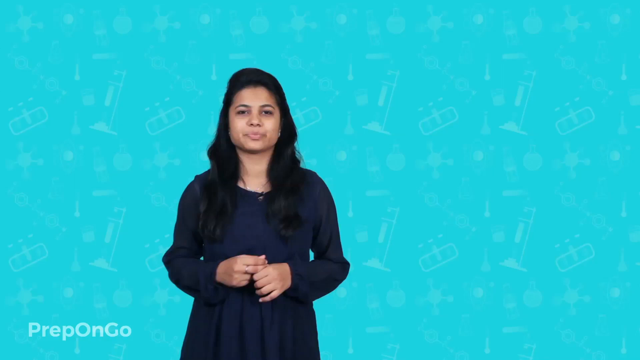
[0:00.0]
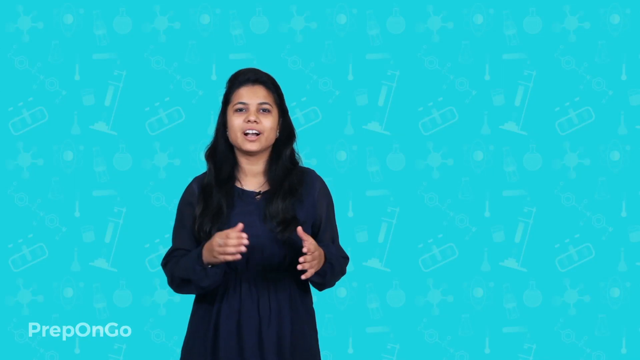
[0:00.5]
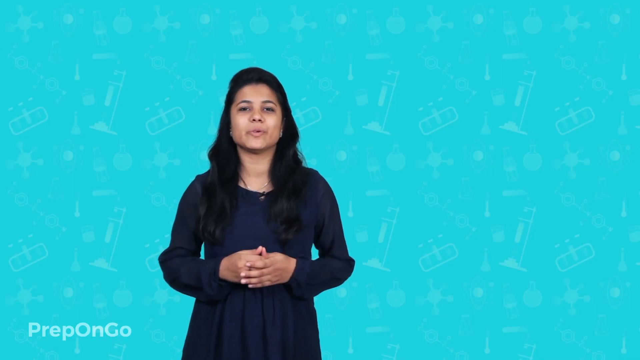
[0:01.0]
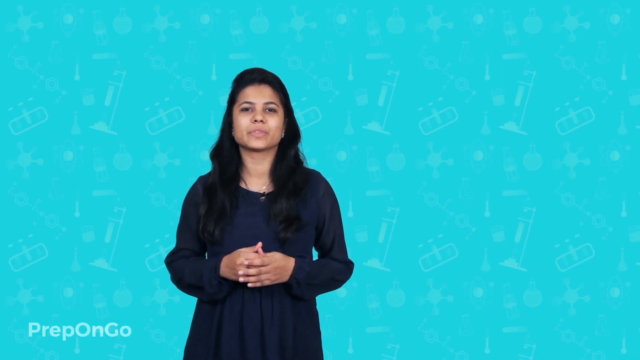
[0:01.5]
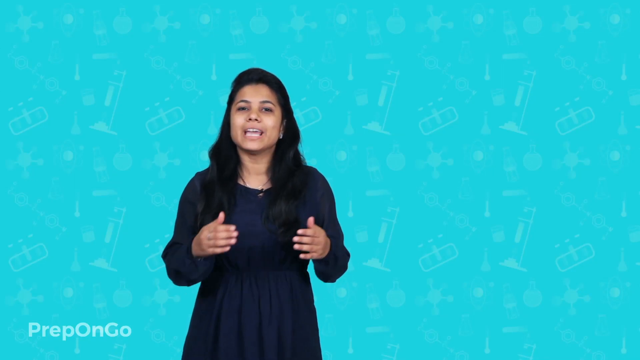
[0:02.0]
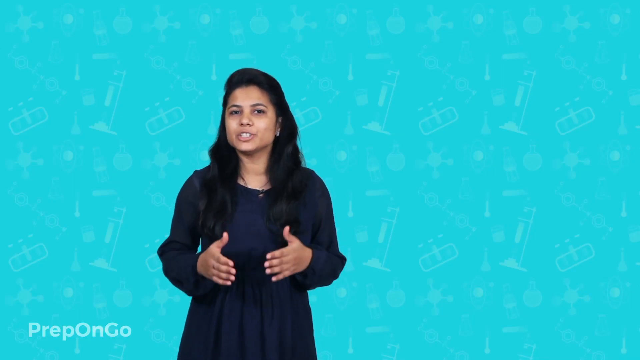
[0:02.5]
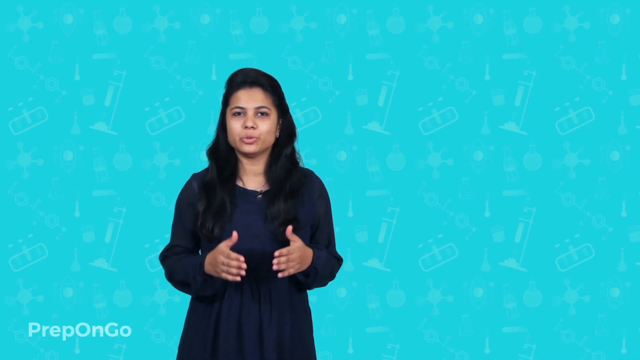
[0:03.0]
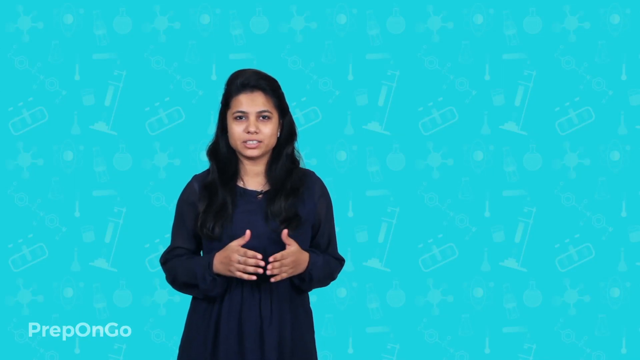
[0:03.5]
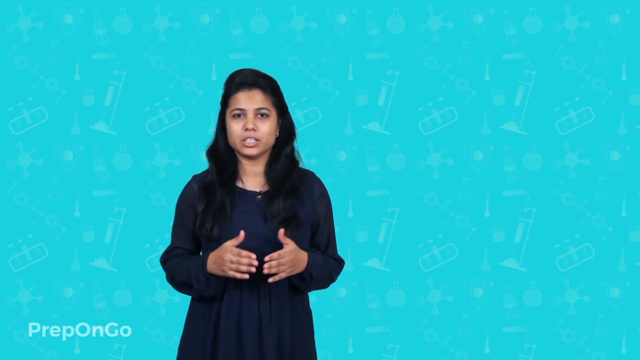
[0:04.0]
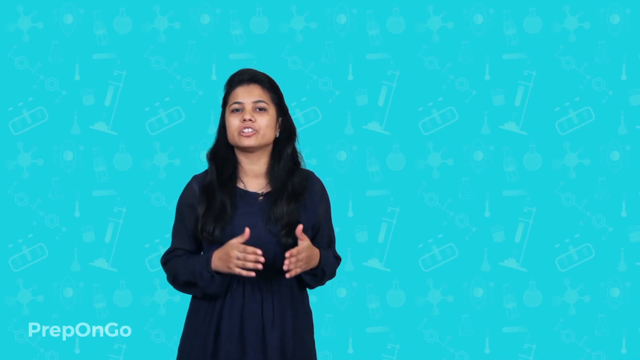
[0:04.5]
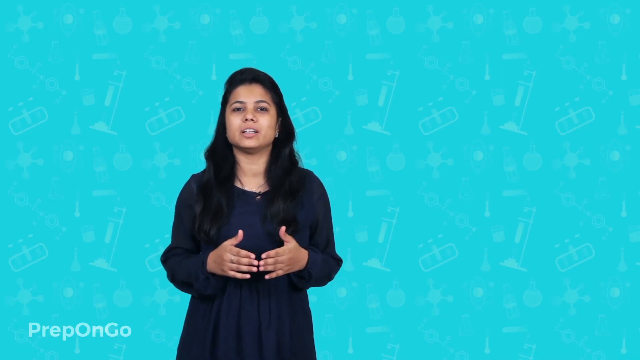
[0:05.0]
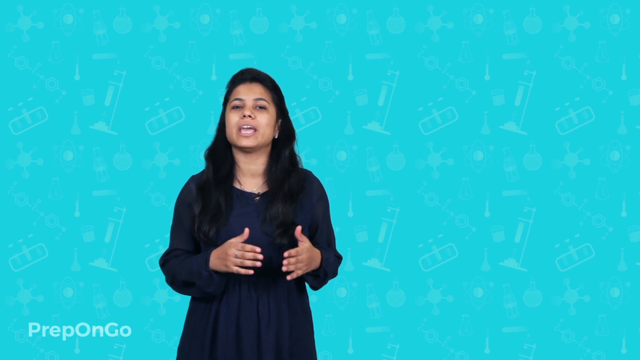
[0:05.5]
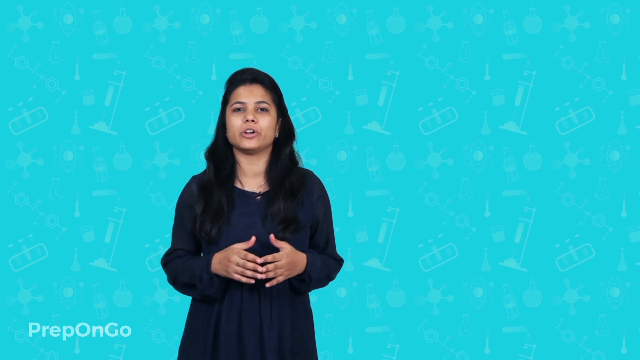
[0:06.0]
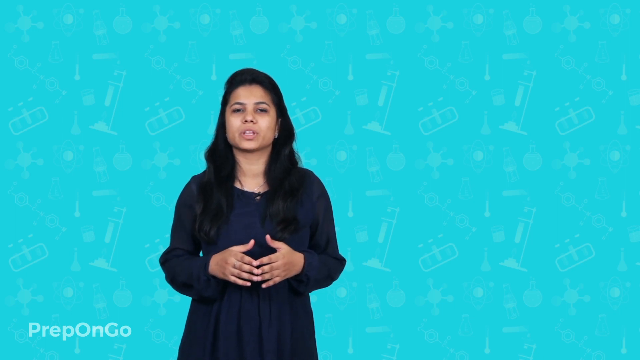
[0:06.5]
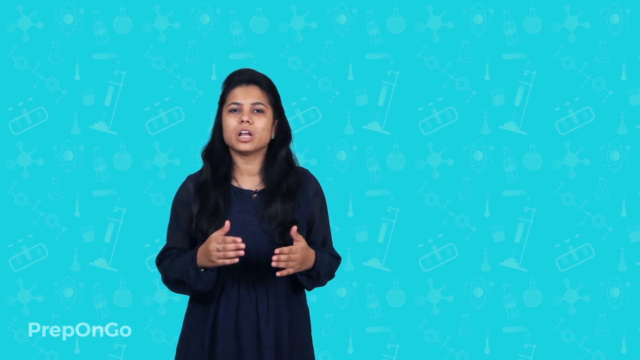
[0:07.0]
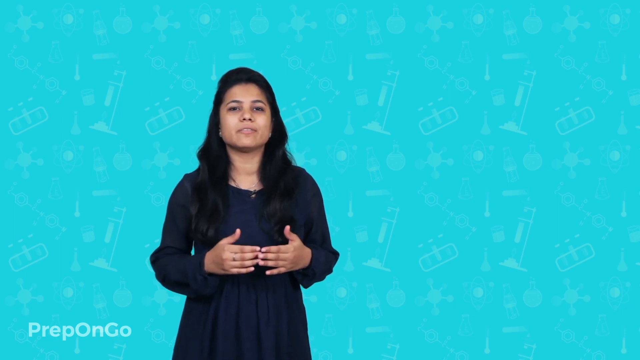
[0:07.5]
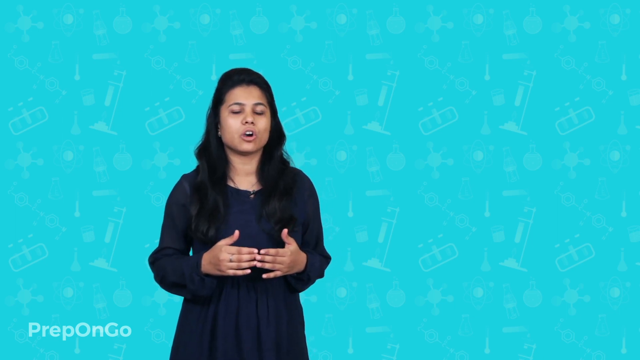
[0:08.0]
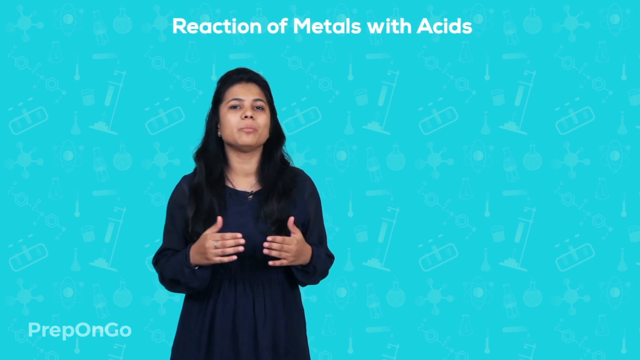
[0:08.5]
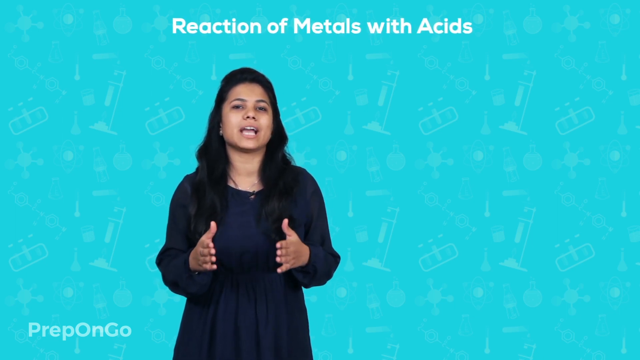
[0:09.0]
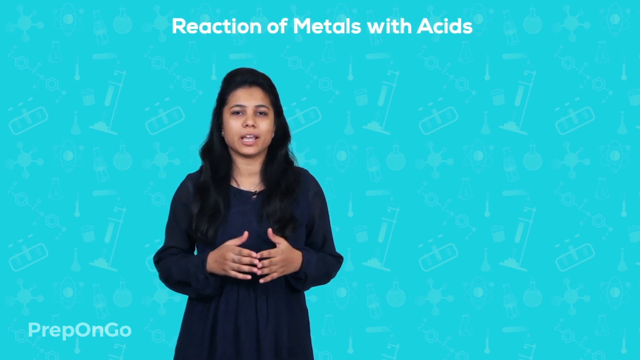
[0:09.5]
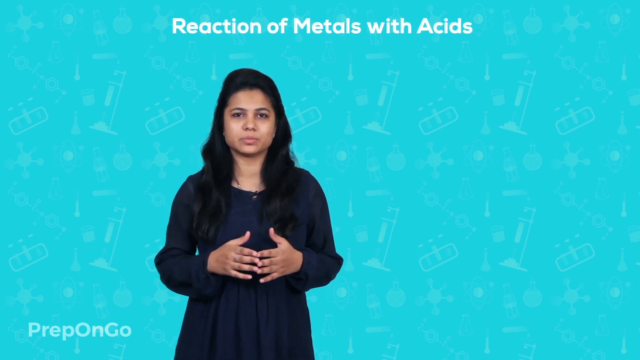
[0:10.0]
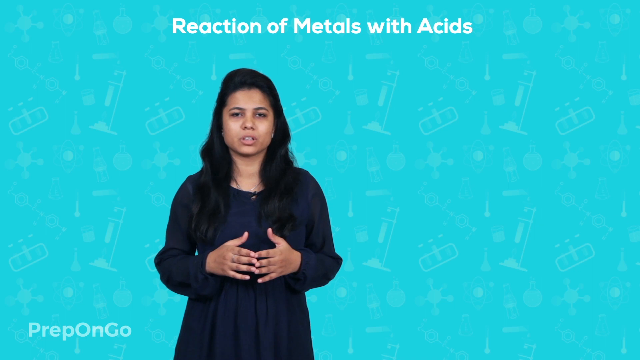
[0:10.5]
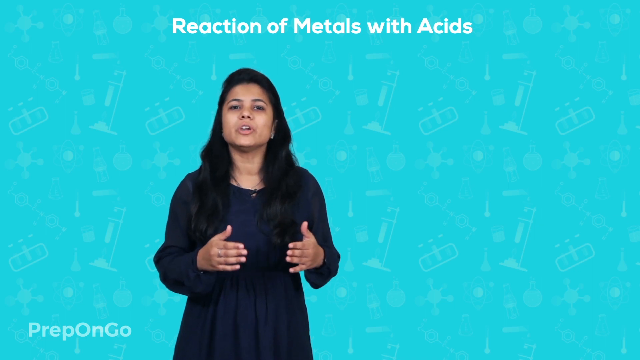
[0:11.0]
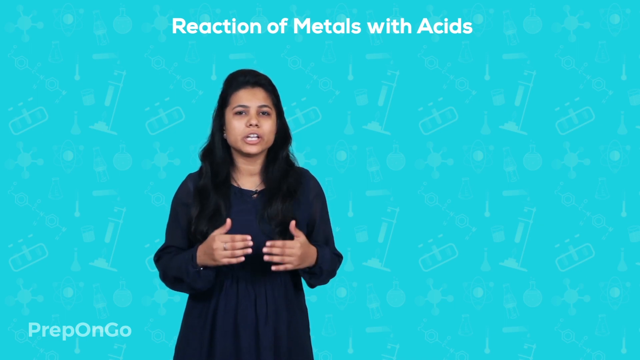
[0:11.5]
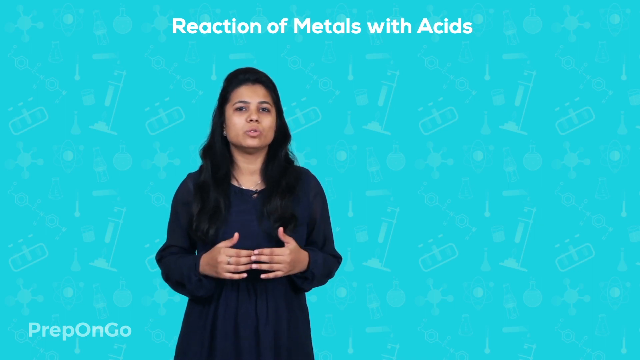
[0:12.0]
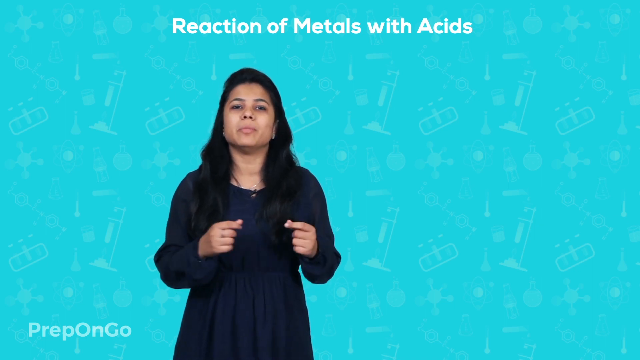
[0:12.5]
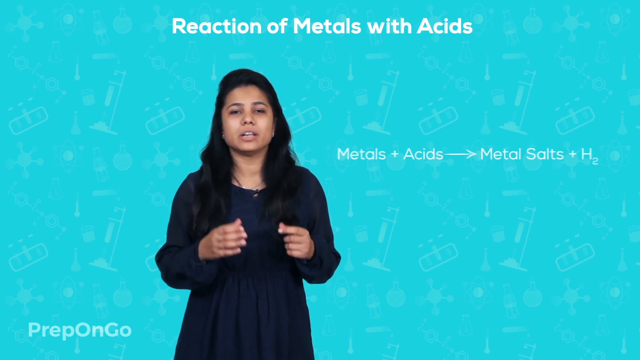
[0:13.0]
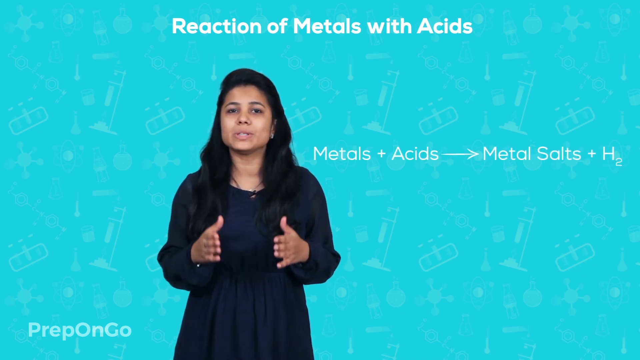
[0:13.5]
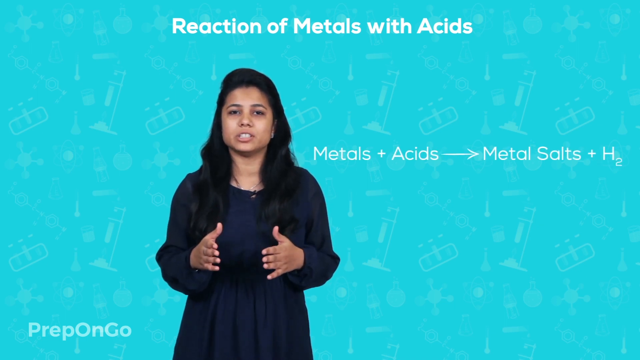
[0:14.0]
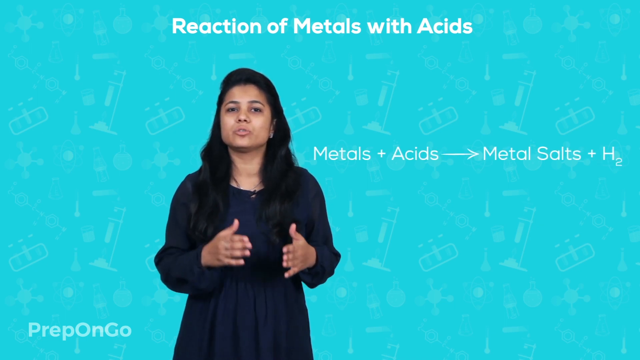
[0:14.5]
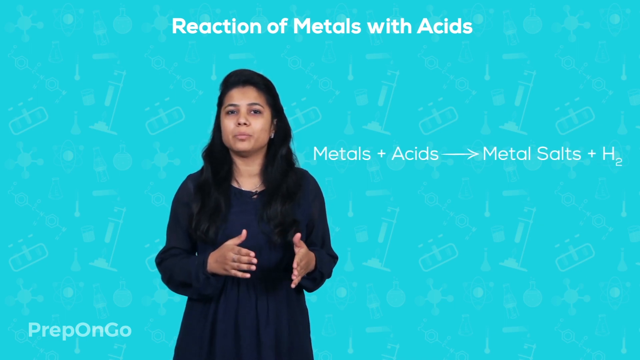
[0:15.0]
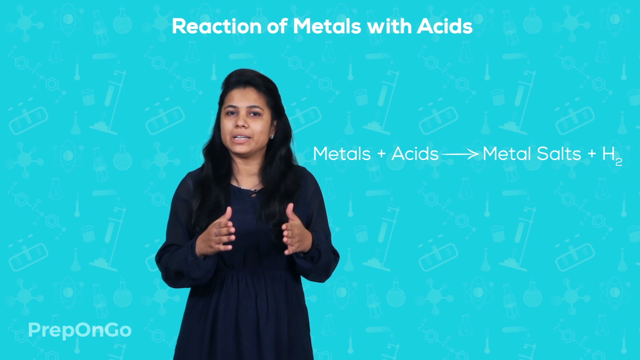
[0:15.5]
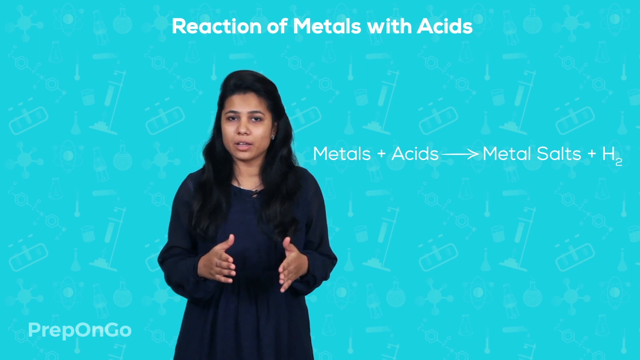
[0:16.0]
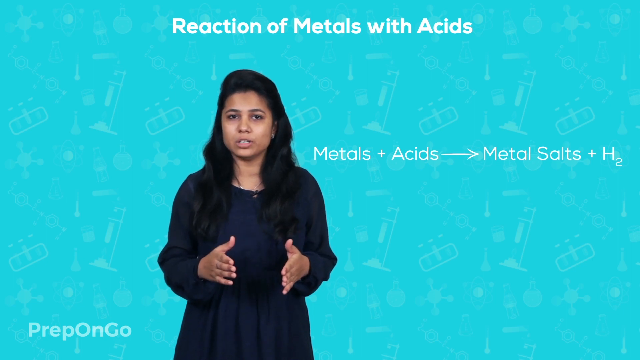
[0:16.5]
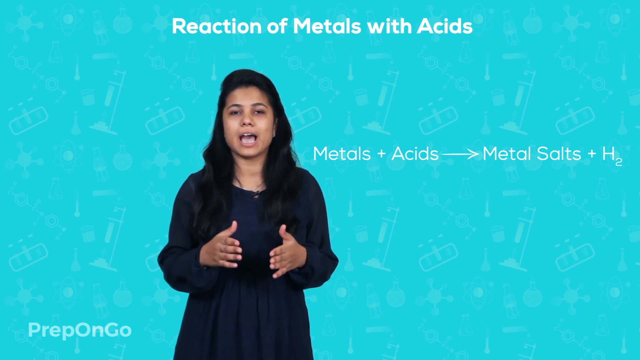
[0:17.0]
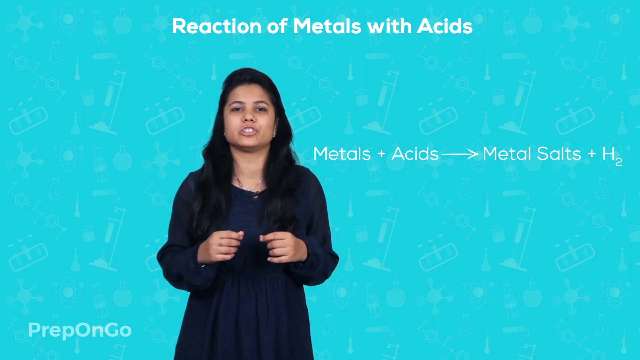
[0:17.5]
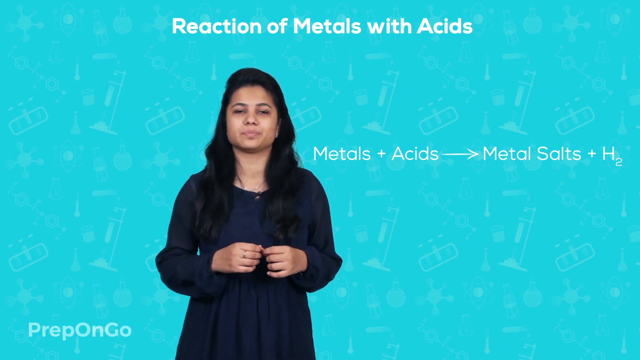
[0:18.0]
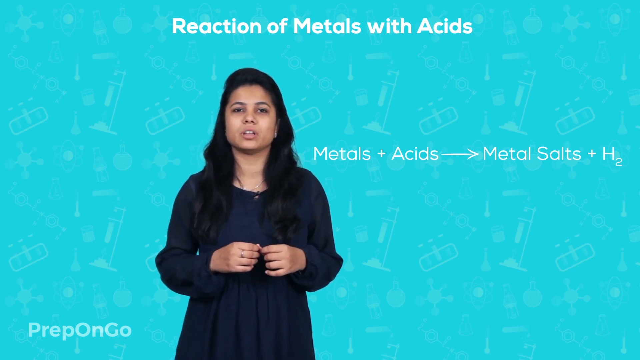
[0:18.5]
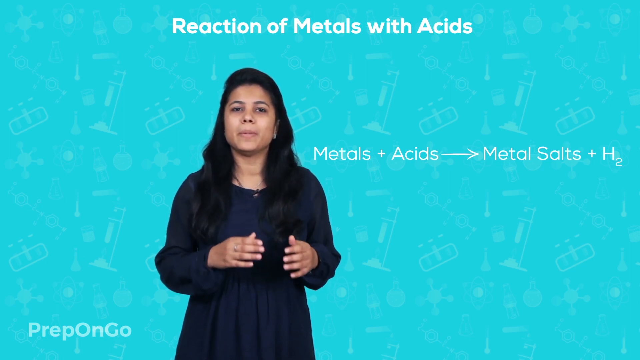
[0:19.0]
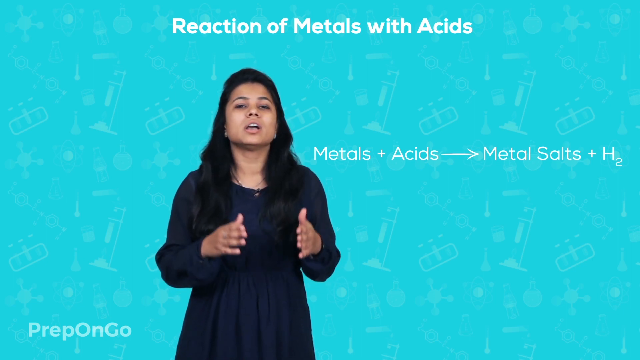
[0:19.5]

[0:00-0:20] This short tutorial is from Prep On Go. The host is a South Asian woman with wavy black hair past her shoulders, wearing a baby doll type dress with fluffy sleeves. The background is light blue with sketches of test tubes and other scientific equipment. A title appears above her head, and then another line of text appears to her immediate right, reading "metals + acids", followed by an arrow pointing right, then "metal salts + H2". Both the title and the text to her right are white. The text to her right is a formula written out in words instead of abbreviations.